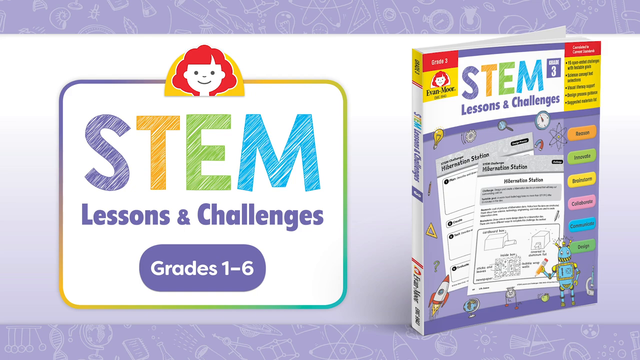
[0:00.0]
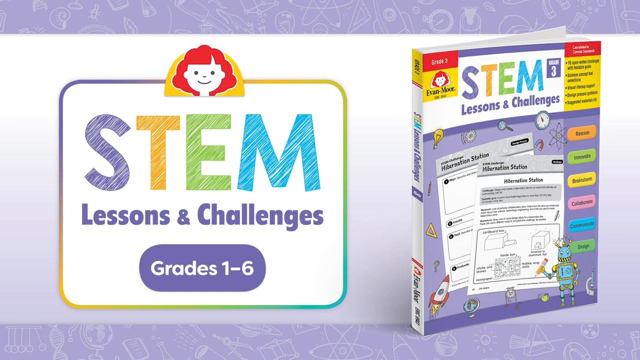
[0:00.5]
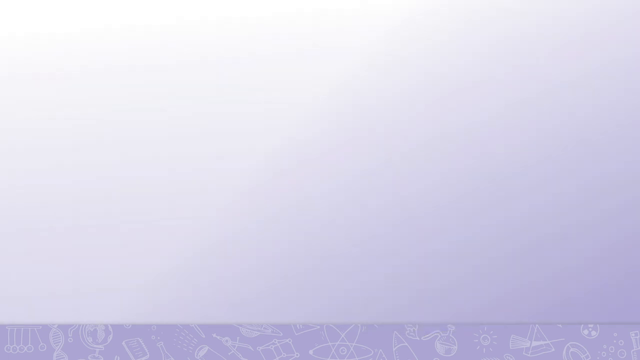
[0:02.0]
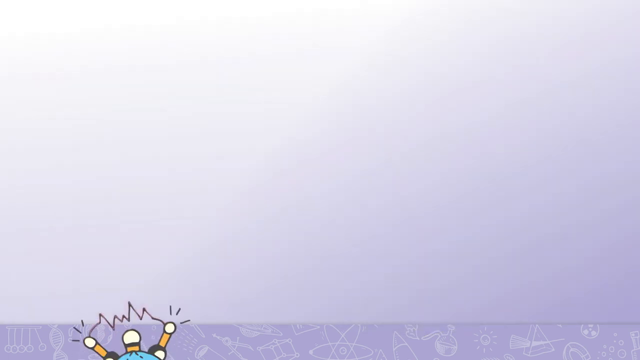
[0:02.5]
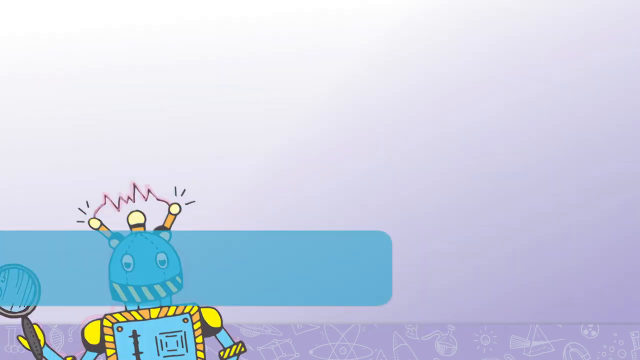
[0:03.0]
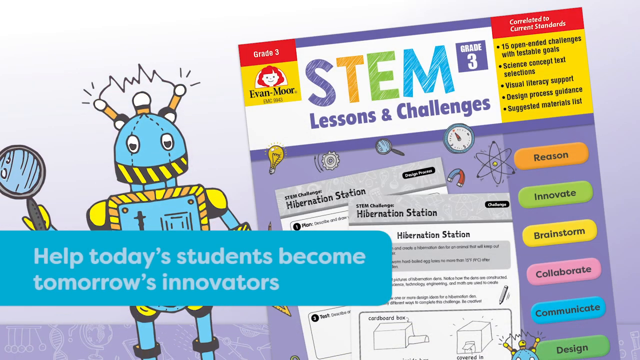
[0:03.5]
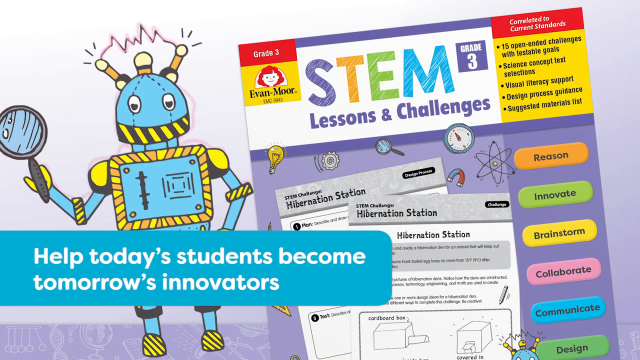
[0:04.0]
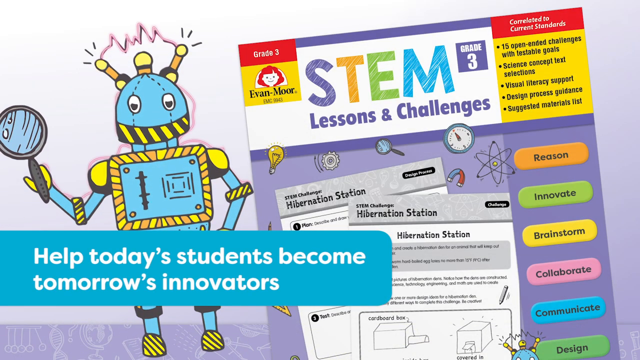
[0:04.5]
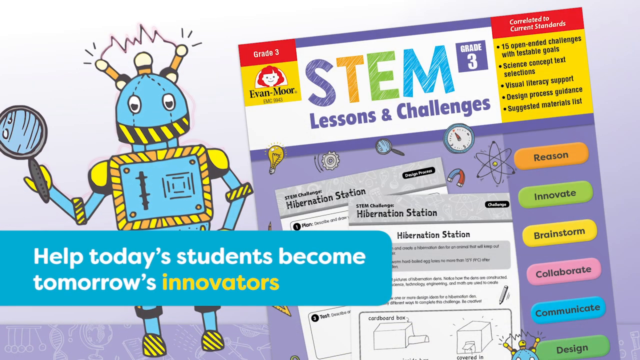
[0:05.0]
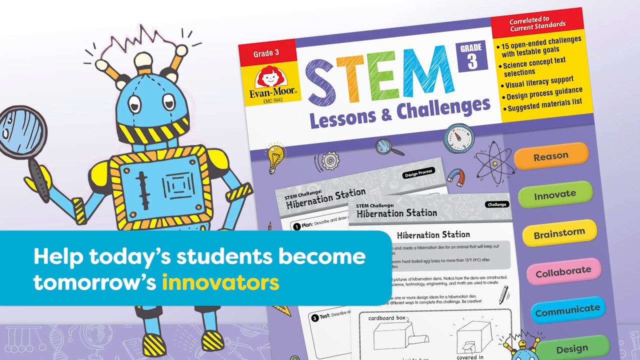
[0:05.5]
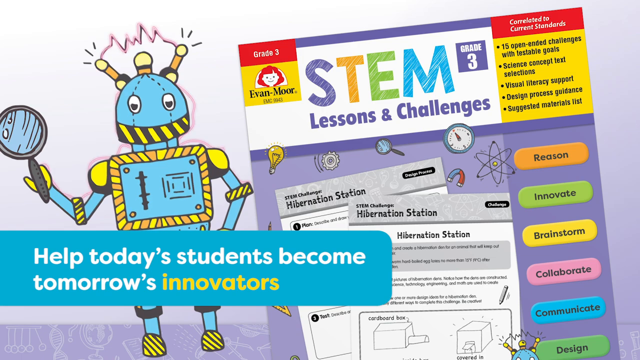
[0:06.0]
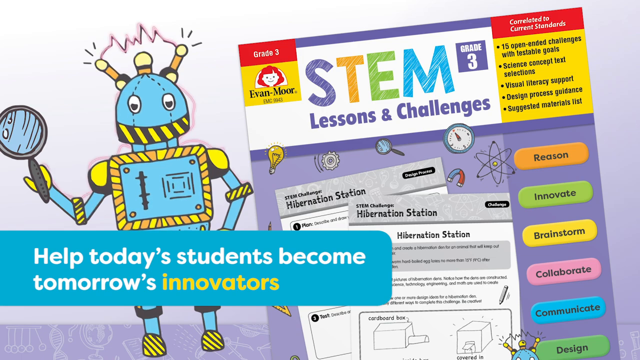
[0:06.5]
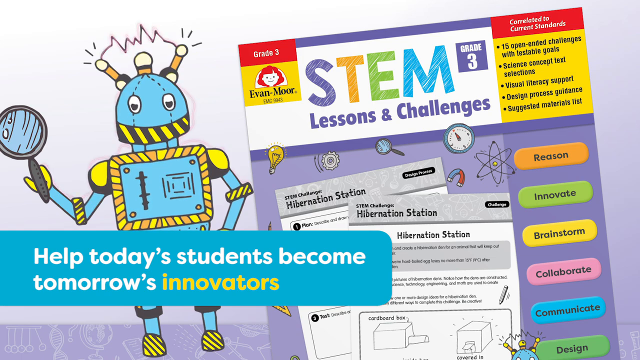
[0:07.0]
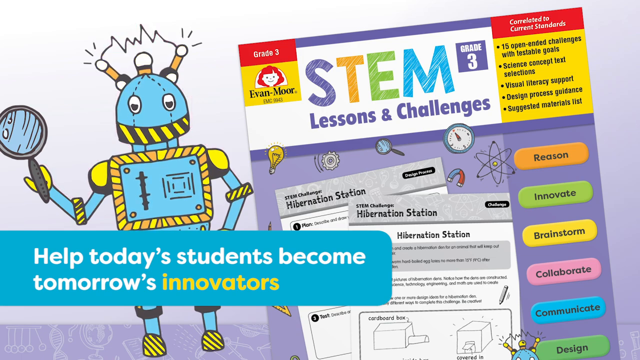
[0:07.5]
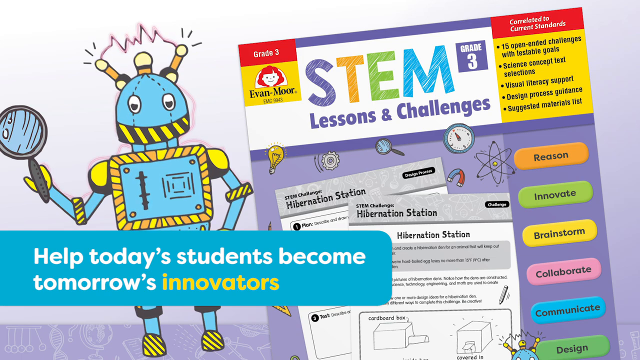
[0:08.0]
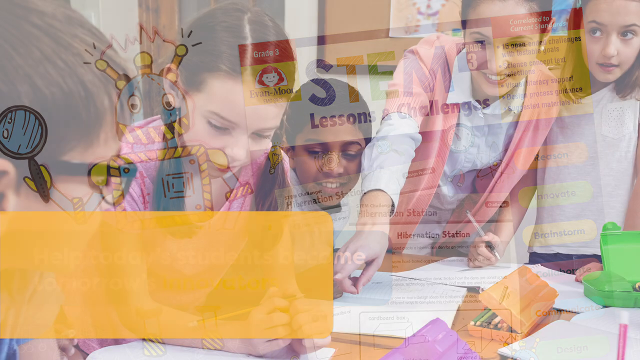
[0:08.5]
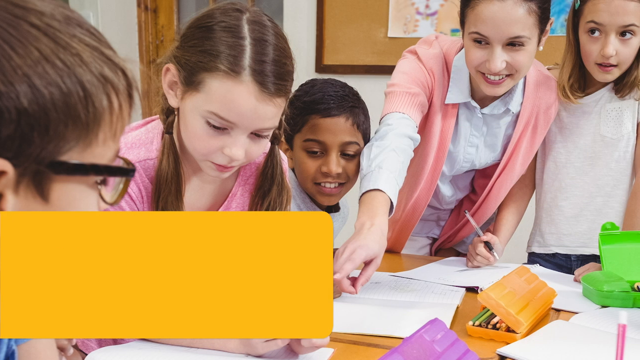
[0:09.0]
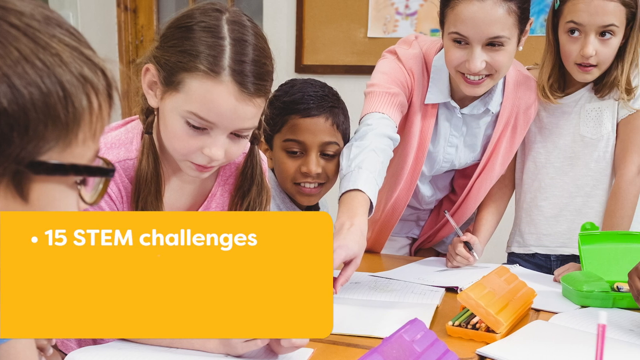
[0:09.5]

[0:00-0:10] A title caption reading "STEM Lessons and Challenges Grades 1 through 6" appears, with a book appearing on the right side. The logo is a little, apparently childish figure with red hair across a kind of yellow, rainbow-like background. The scene transitions to a robot on the left with the text "help today's students become tomorrow's innovators", while on the right a STEM Lessons and Challenges Grade 3 dashboard, or a book-like experience, is shown. Next, a picture of some kids fades in on the top side with an orangish tone, and an orange rectangle is on the bottom left side.